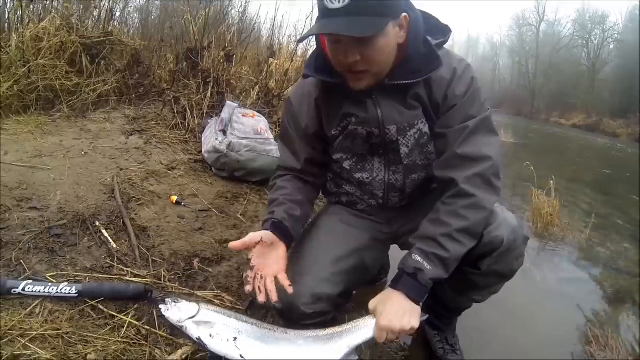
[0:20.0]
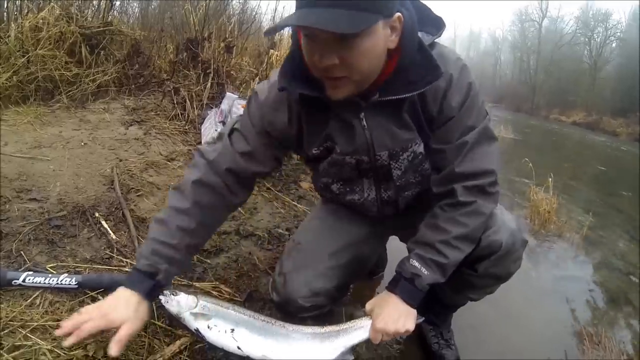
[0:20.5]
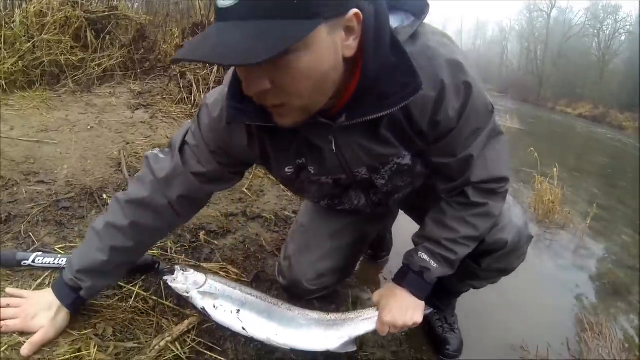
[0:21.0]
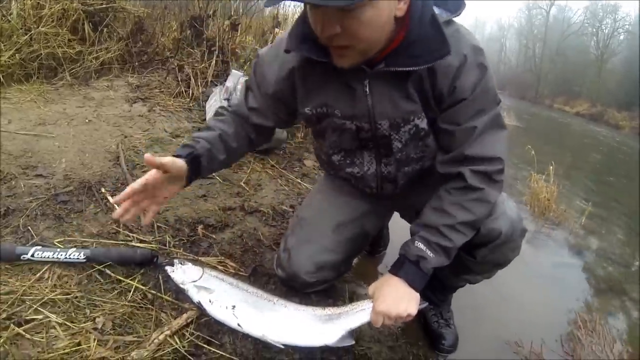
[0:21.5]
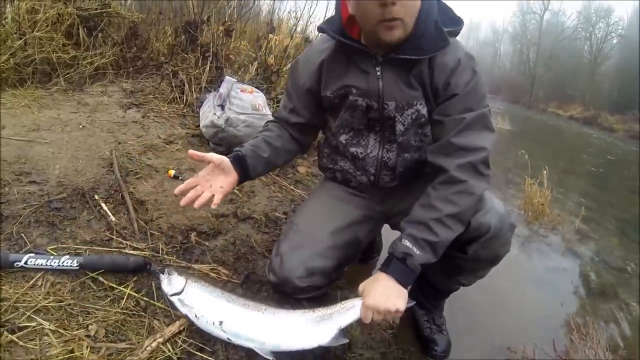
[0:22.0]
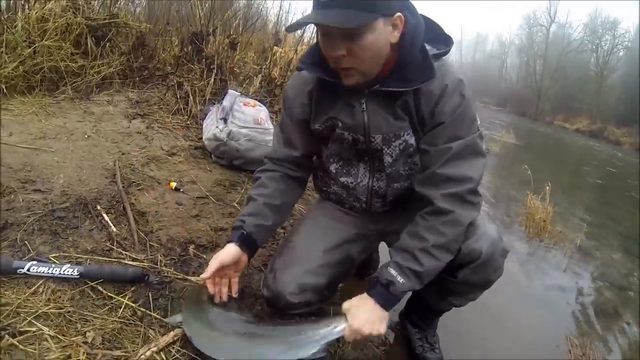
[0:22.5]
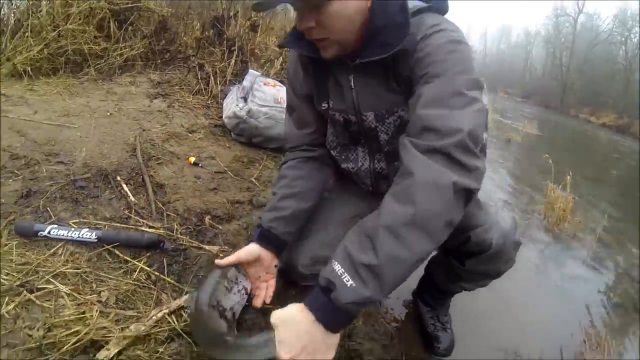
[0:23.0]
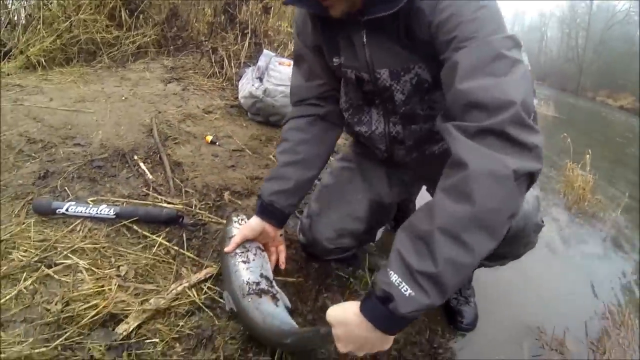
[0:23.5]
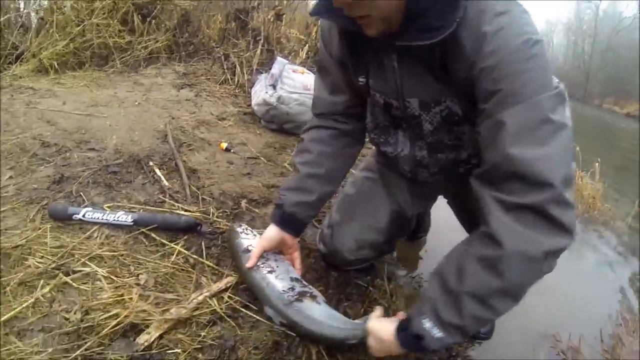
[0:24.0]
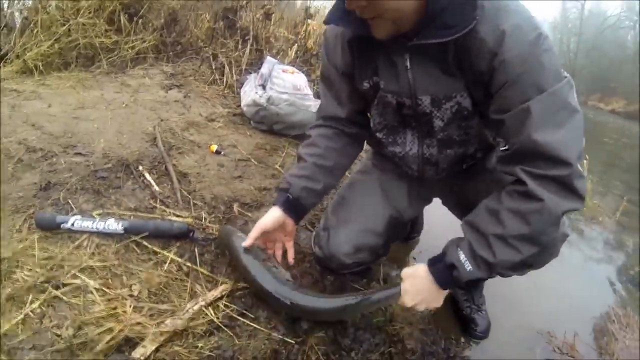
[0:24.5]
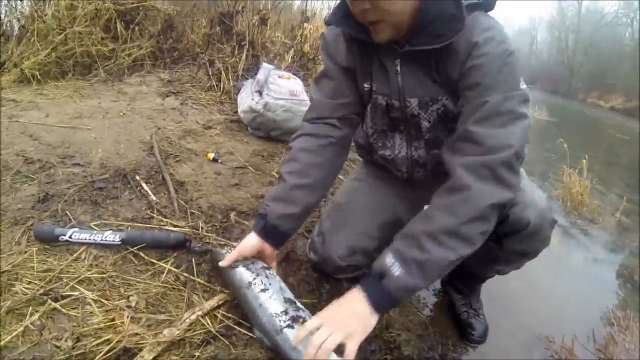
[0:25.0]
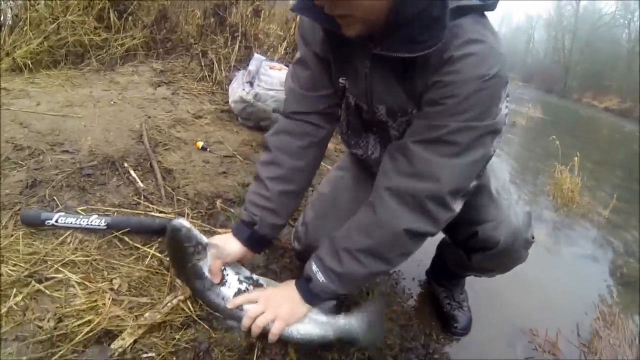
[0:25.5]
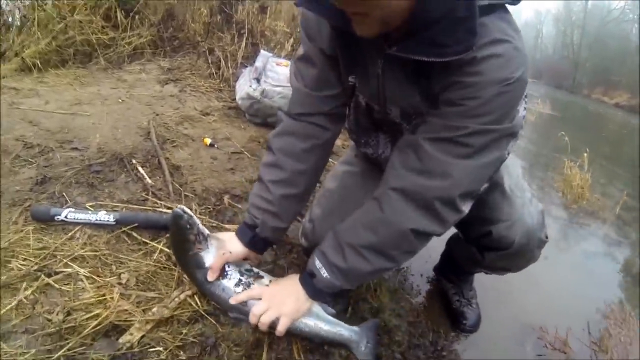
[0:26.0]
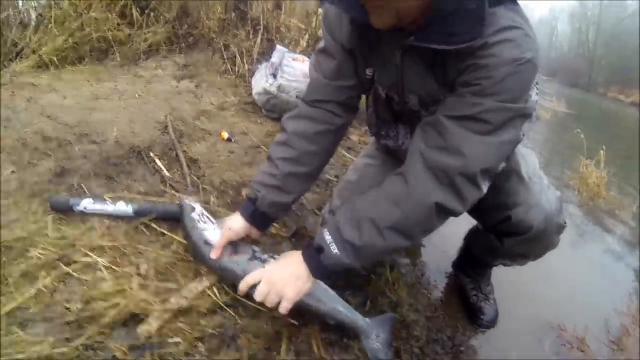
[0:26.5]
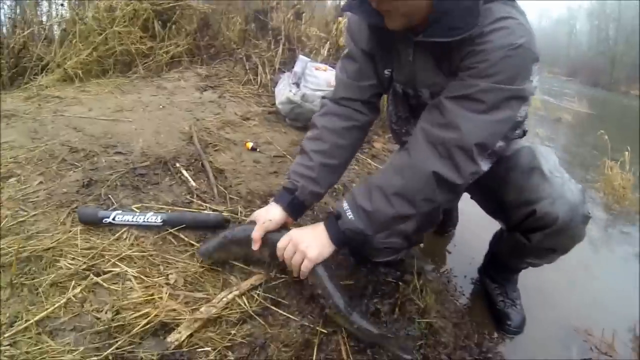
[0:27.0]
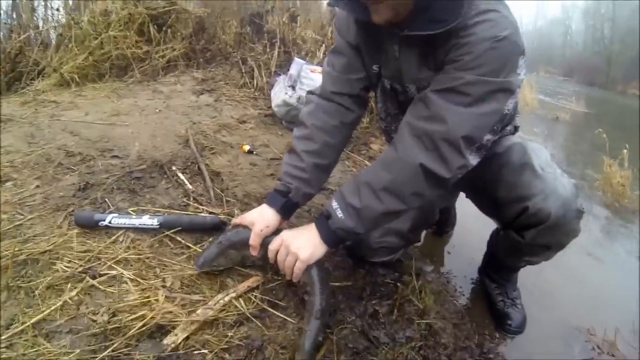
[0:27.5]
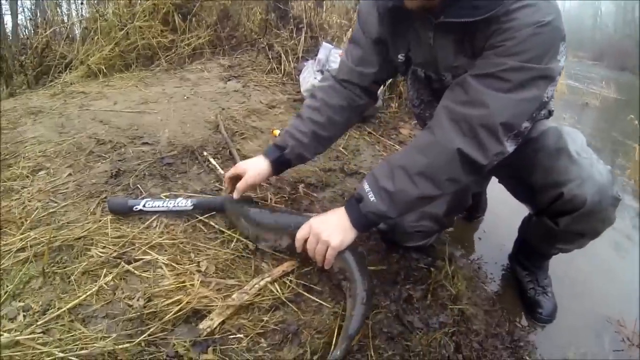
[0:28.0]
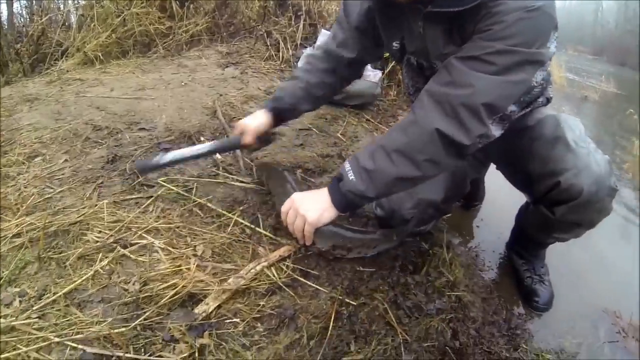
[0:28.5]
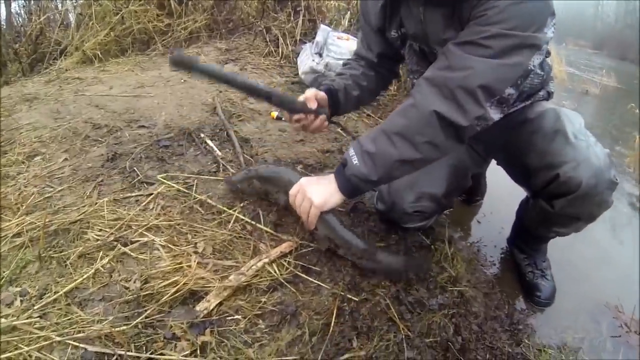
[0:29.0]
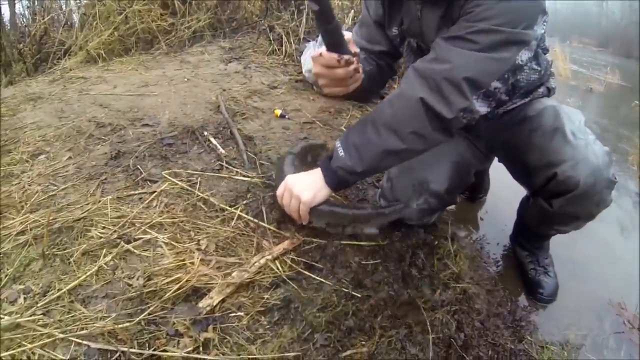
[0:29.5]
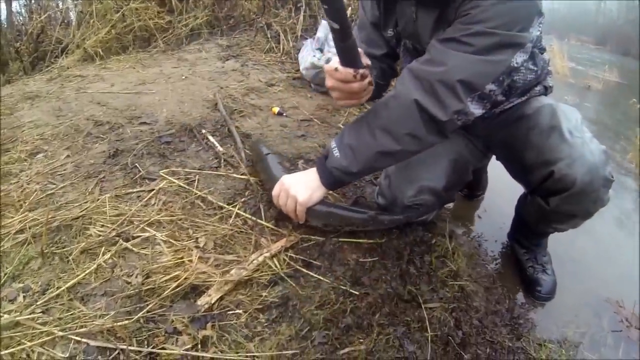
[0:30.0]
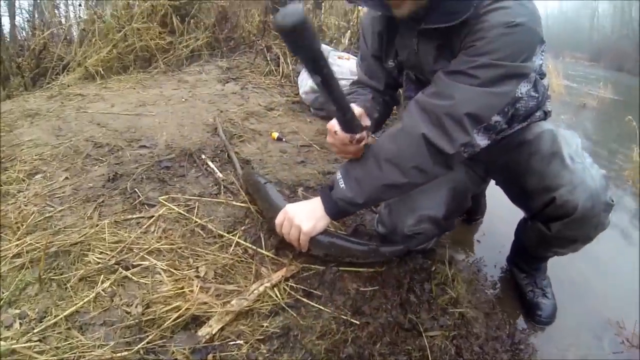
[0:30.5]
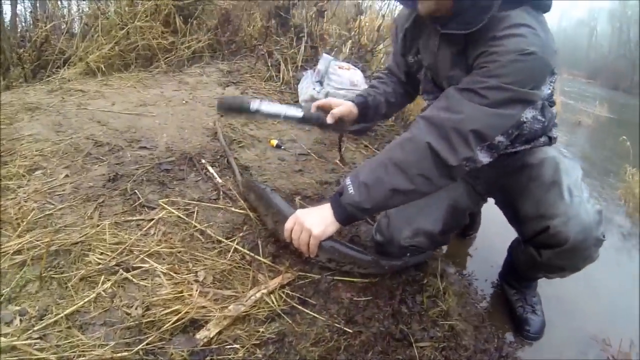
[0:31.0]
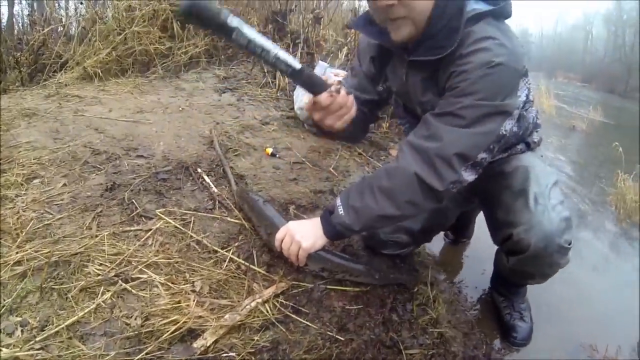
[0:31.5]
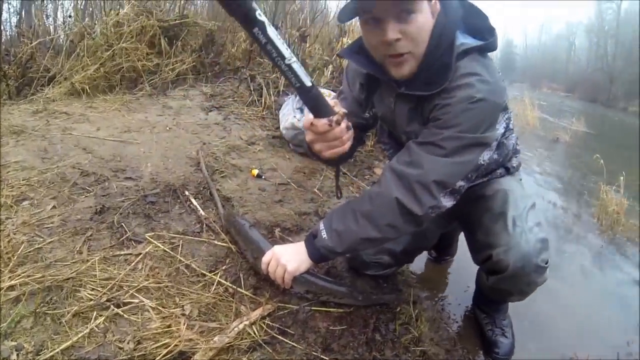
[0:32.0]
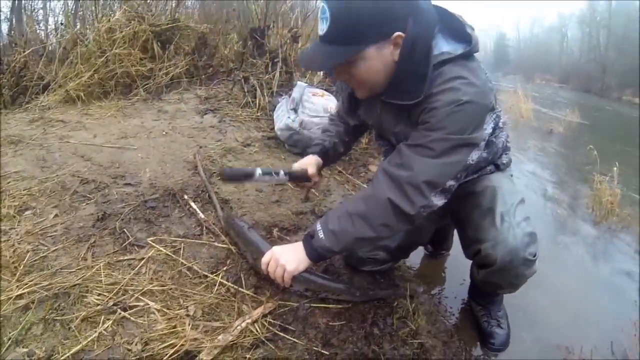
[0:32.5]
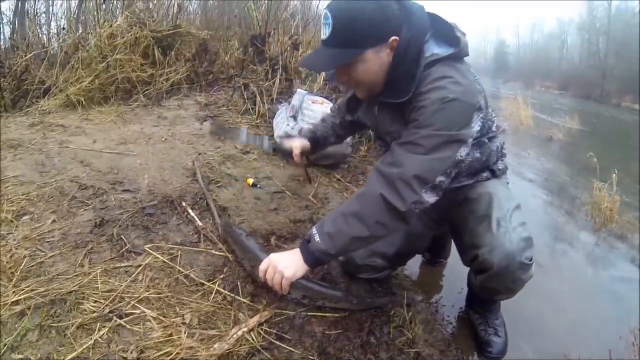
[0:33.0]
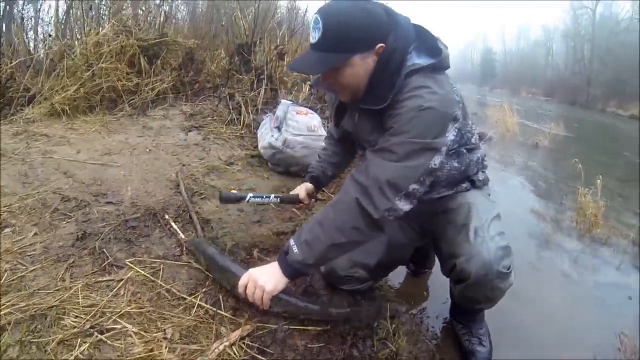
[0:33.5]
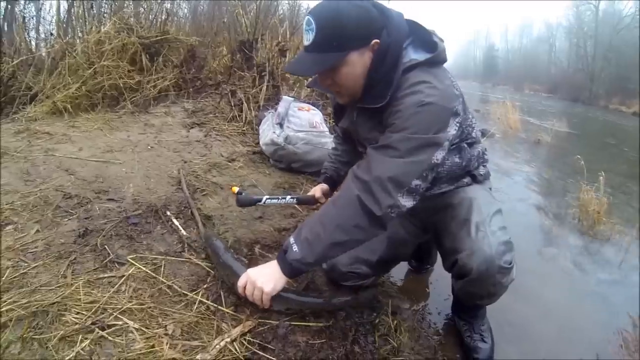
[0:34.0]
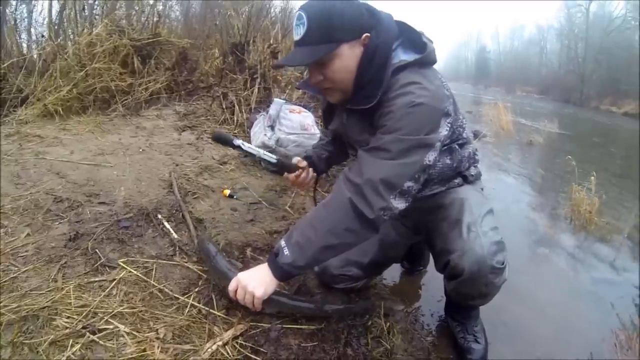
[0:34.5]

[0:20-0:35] The man kneels on the bank of the river with one foot in the water and his right knee on the ground, wearing camouflage pants, a camouflage jacket and a baseball cap. He holds the fish with two hands close to the camera to show how big it is. The fish is still alive: its mouth moves and it wriggles, trying to get away from him and back into the water. With his right hand he picks up a large baton and hits the fish on the head, either to stun it or kill it. The baton has two black ends, a wrist strap and a silver middle with a name in white writing, possibly Lenticular; it looks like a little bat and looks pretty heavy. Once it is hit, the fish stops moving, either stunned or dead.